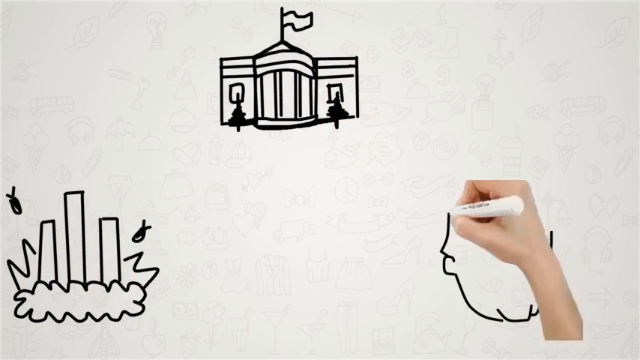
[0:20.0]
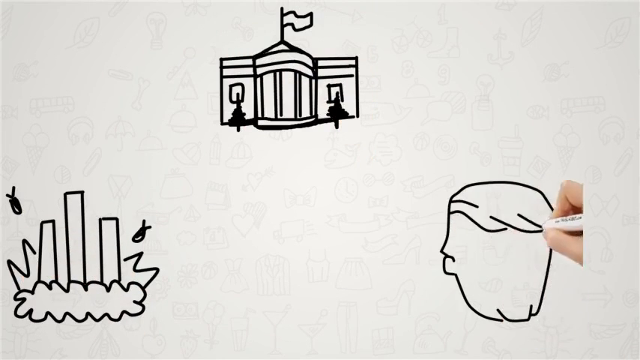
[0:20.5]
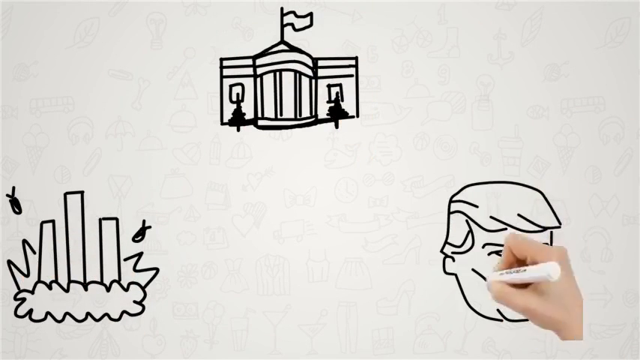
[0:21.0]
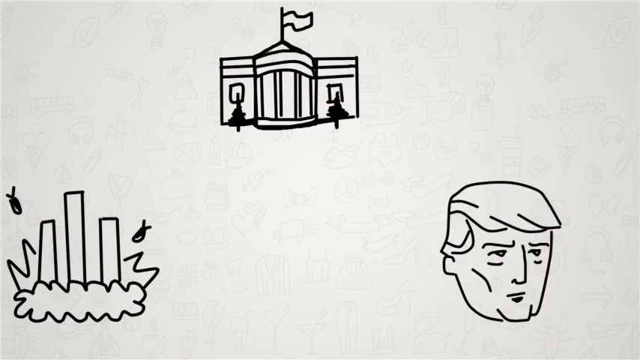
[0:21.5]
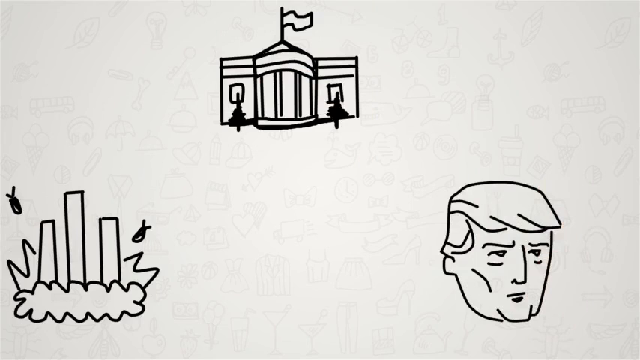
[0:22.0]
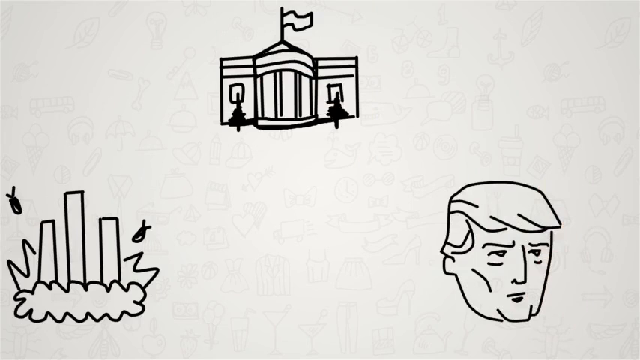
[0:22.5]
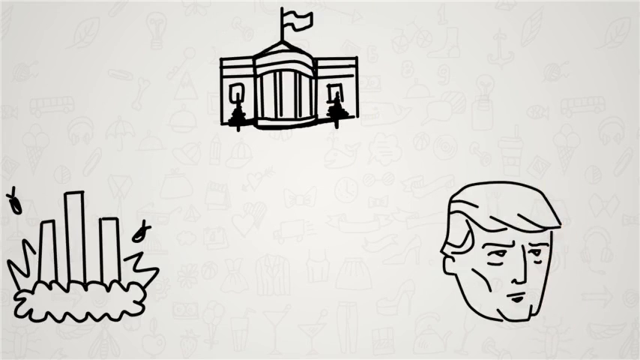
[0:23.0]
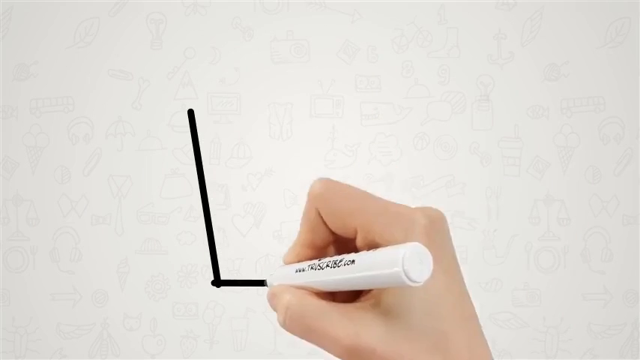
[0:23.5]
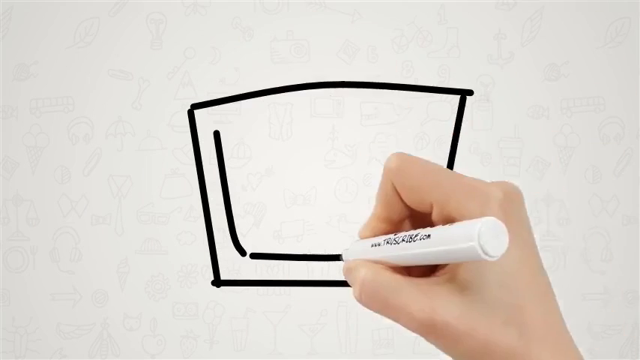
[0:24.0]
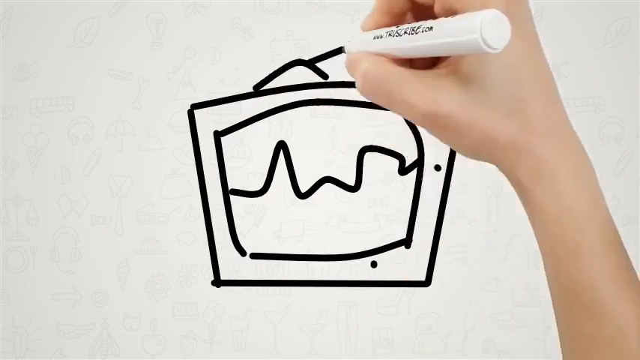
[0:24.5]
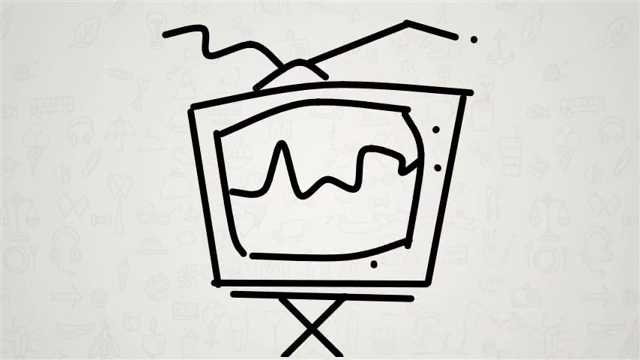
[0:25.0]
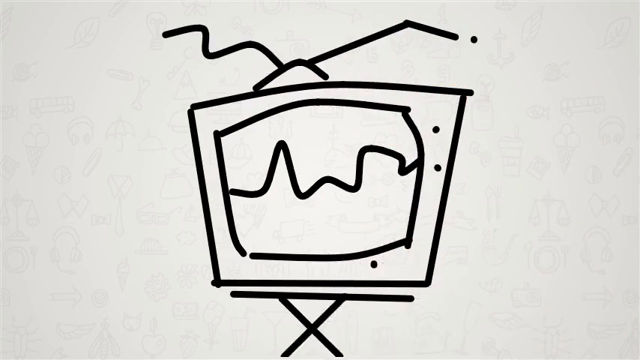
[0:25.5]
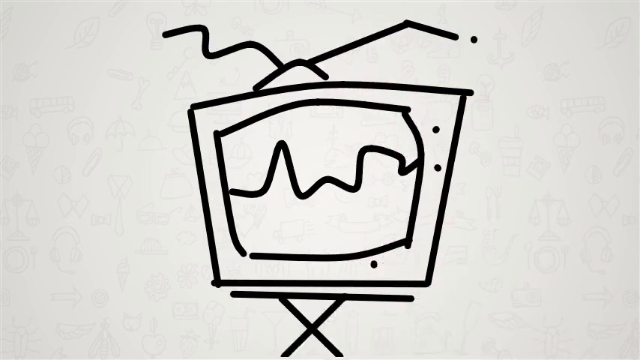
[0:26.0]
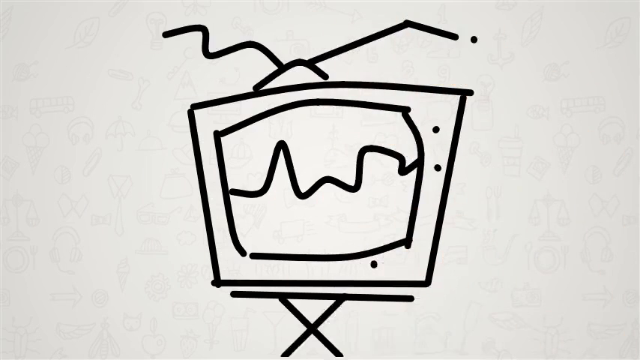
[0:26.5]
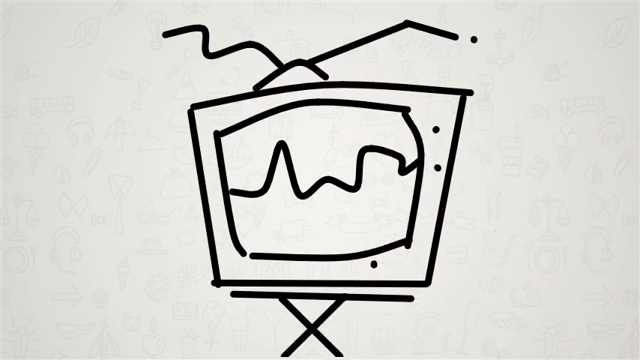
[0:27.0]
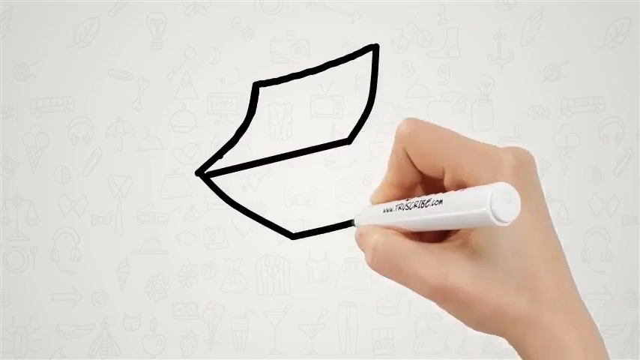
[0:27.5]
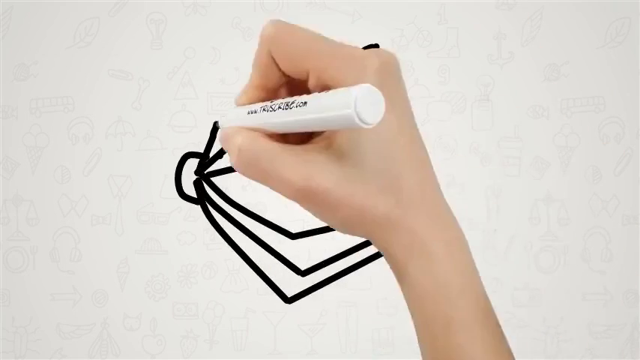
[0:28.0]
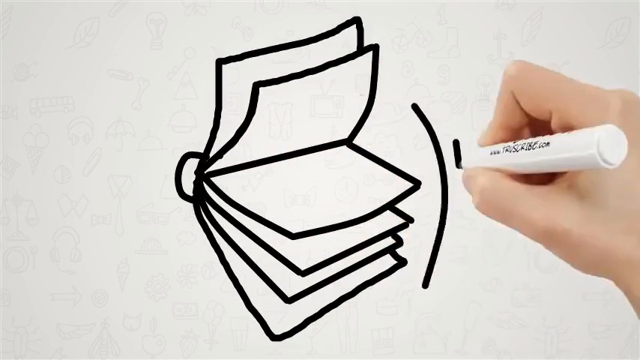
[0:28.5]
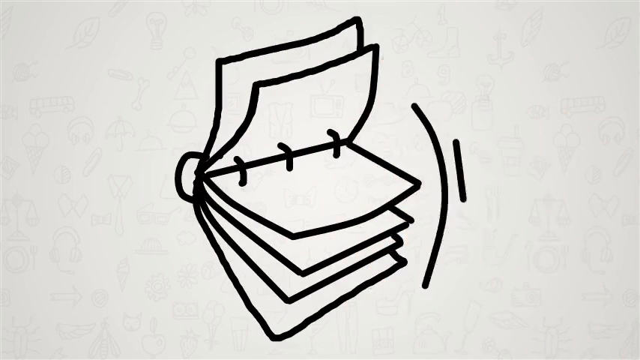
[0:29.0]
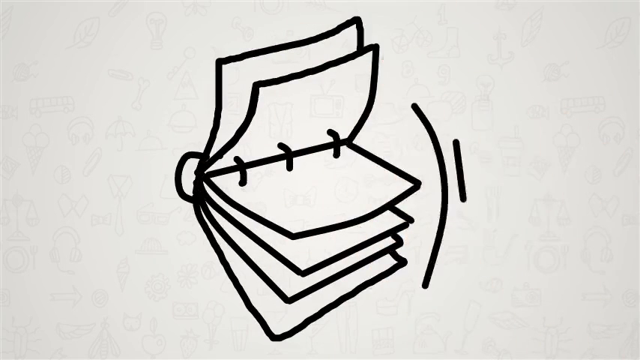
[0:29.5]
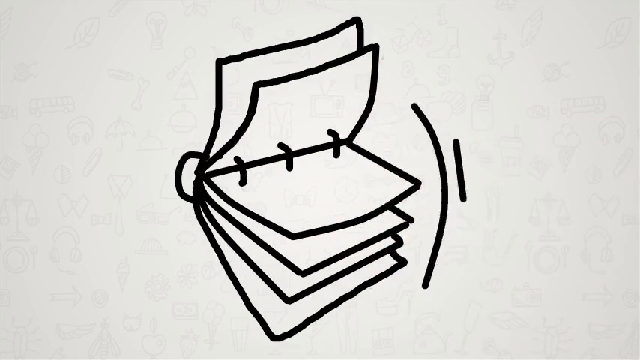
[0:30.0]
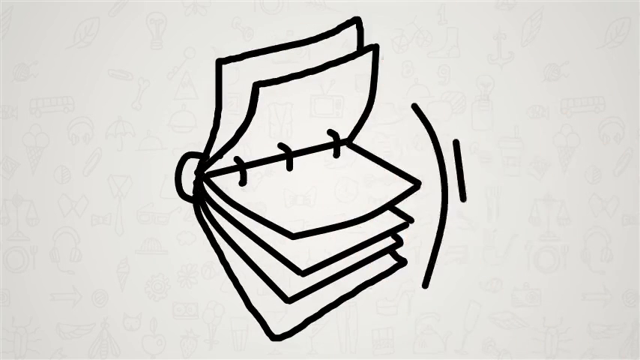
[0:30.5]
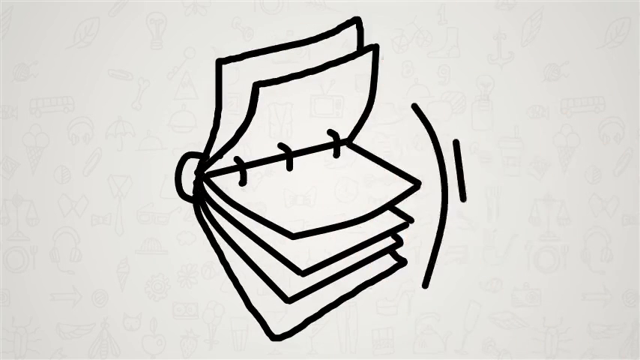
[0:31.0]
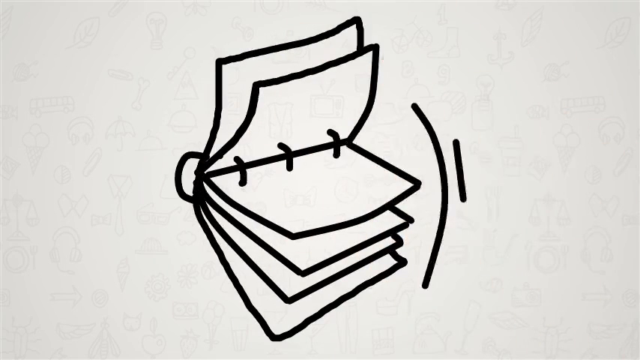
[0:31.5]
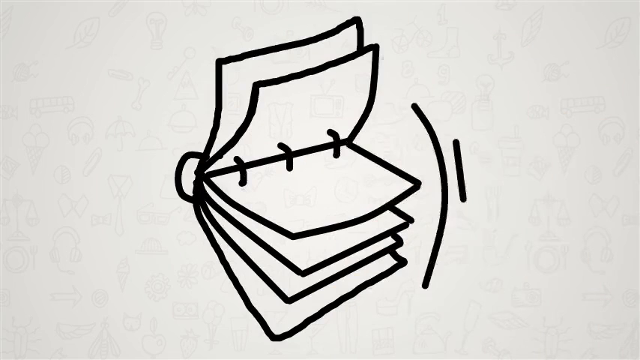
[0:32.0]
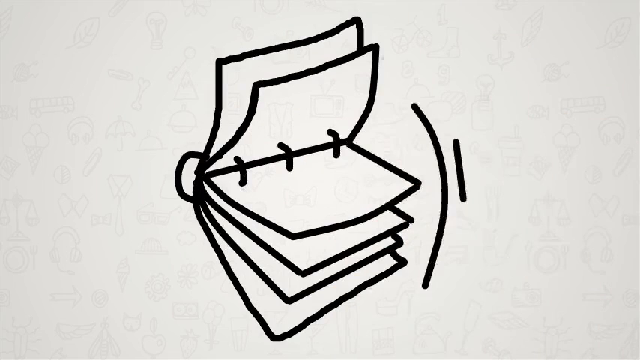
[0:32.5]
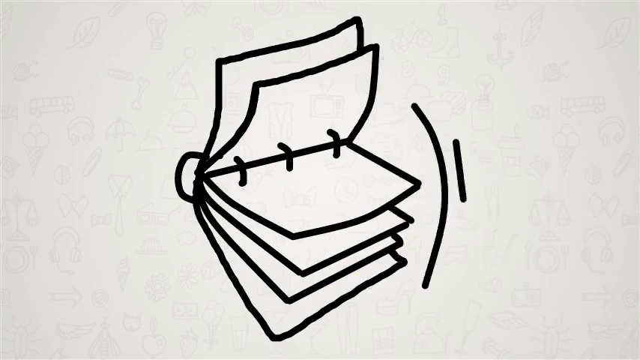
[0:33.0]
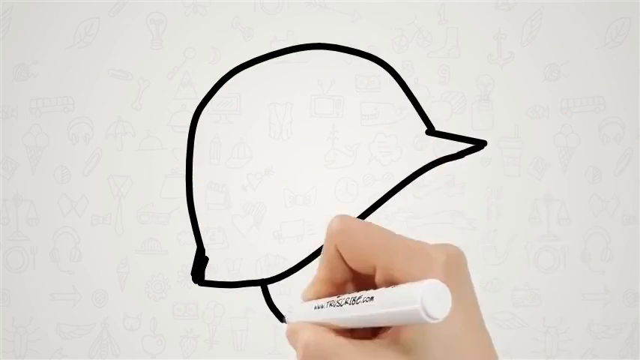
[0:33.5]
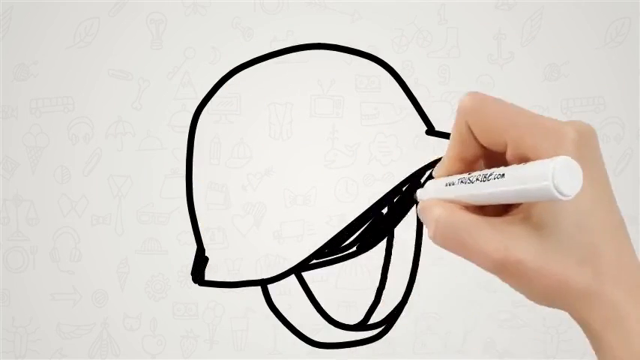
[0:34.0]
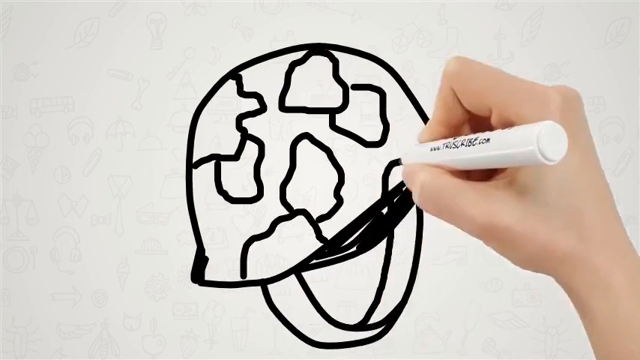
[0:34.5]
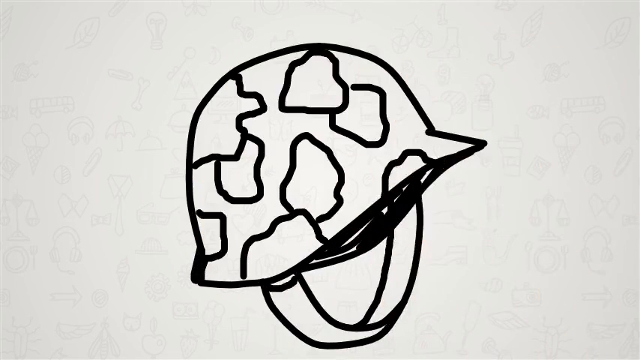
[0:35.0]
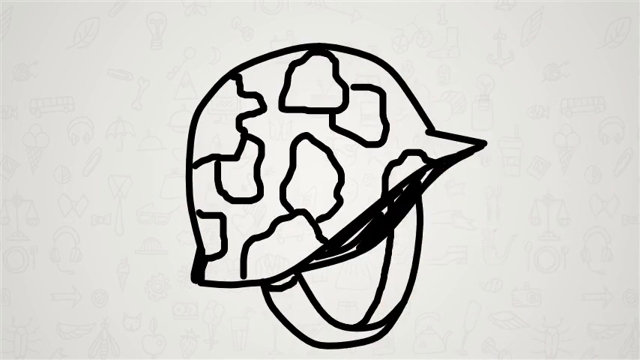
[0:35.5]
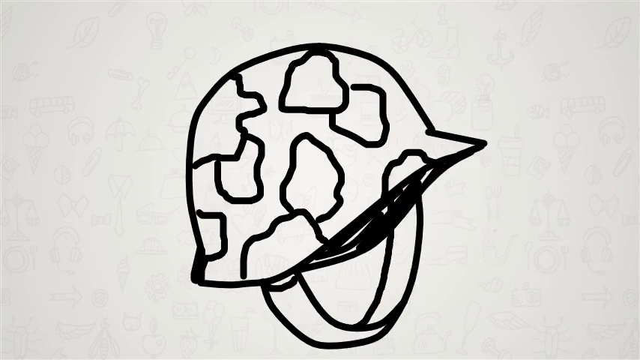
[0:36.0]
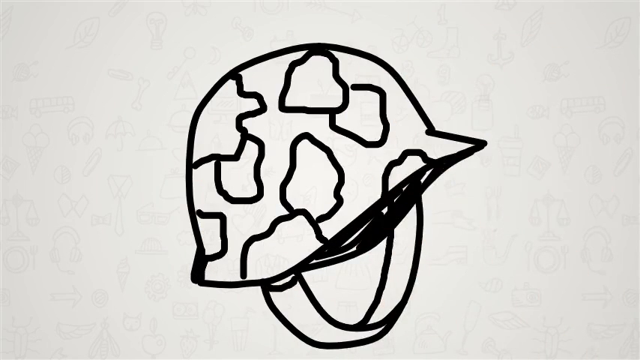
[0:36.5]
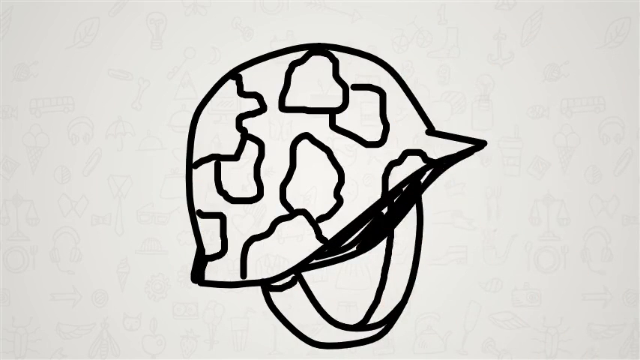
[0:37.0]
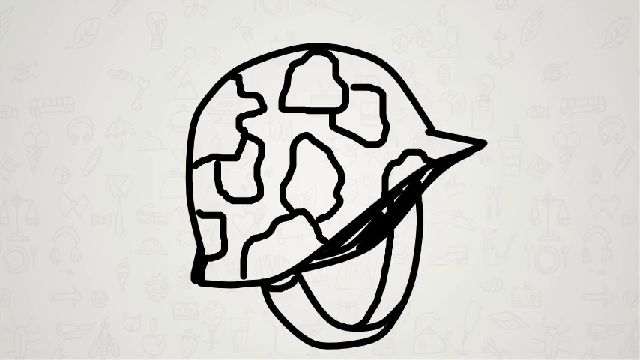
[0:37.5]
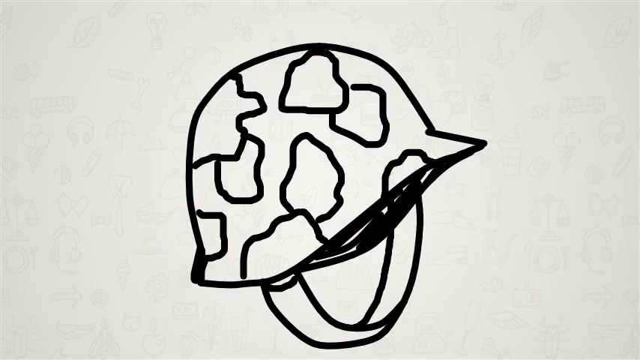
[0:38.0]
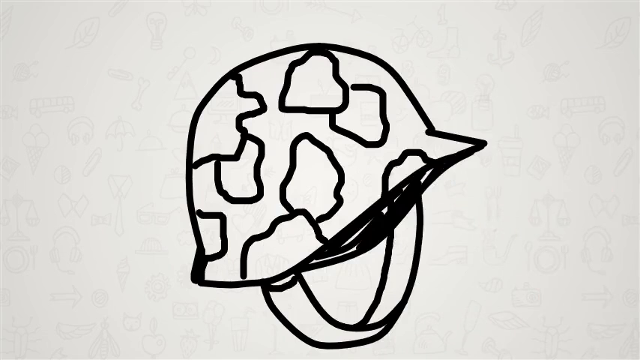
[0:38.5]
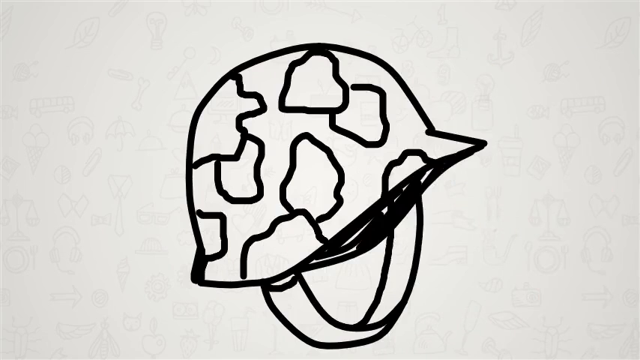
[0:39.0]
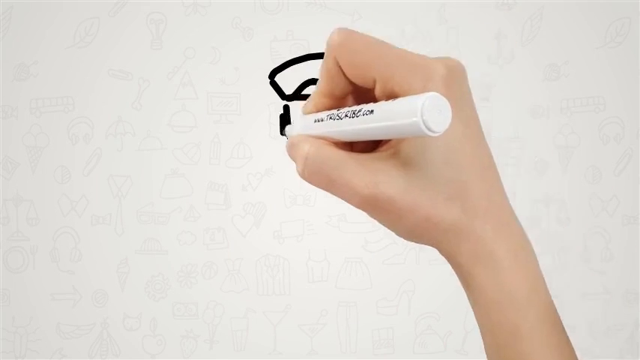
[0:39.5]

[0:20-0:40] On a white background, the hand and part of the arm of a white person hold a white pen and draw various pictures in black ink. In the bottom left-hand corner is what looks like some atomic bombs coming down, drawn in black, with some clouds, little lines representing fire and explosions, and three columns coming up, so it looks like some sort of explosion. In the top centre is what looks like a drawing of the White House, with two little trees drawn in black either side of it in front of two windows, four columns in the centre, and a flagpole and flag at the very top. The hand then draws, in the bottom right-hand corner, what looks like Donald Trump: his trademark combed-over hair, his nose, two eyes, eyebrows and mouth, some lines representing his cheeks and one of his ears, in what looks like a side/part front-on view. The next drawing appears to be a television on a little stand with two crossed-over legs; there is a single wavy line in the centre of the screen, and on top two curvy antennas come from an aerial. Then an open book, or some sort of file, is drawn, attached by three curved metal lines, with six pages flicked open and two lines at the side representing the motion of it being opened. Next is what looks like some sort of hard hat or army hat with seven wavy circles on it and a line at the bottom representing where it would go under the chin, all drawn in black. The start of a person being drawn is then briefly visible, but it moves on very quickly before it can be seen properly.